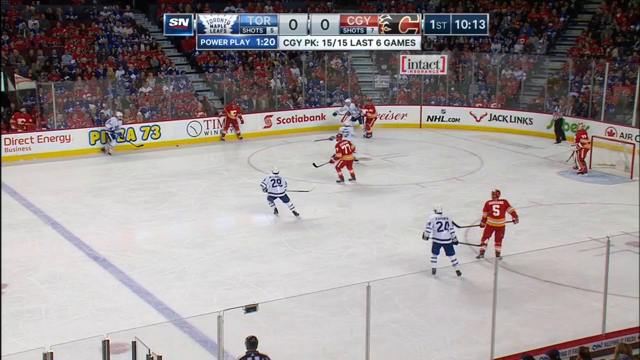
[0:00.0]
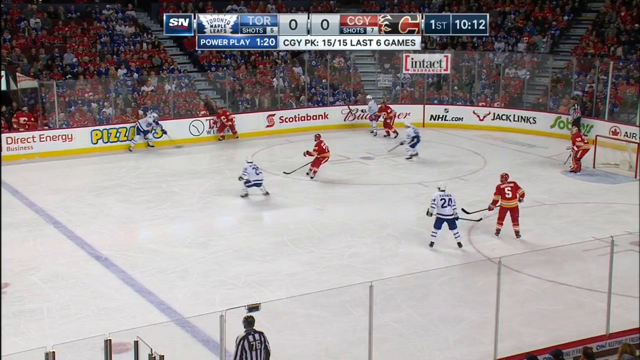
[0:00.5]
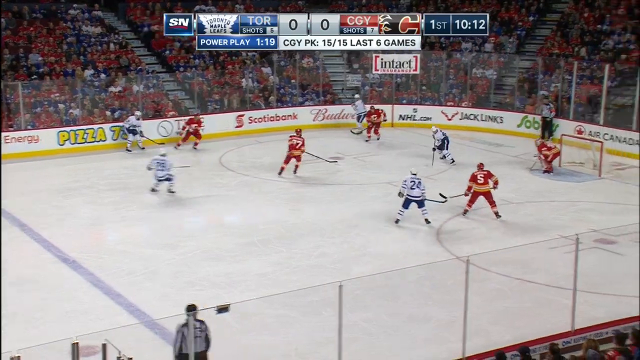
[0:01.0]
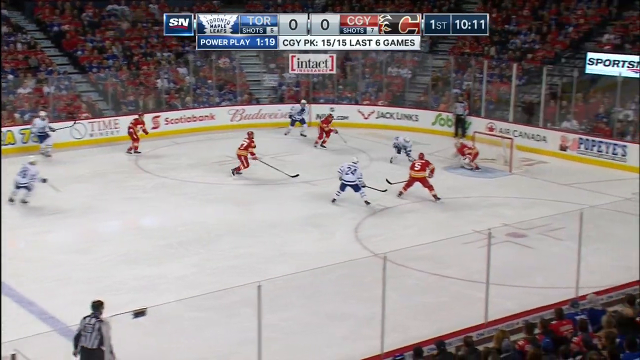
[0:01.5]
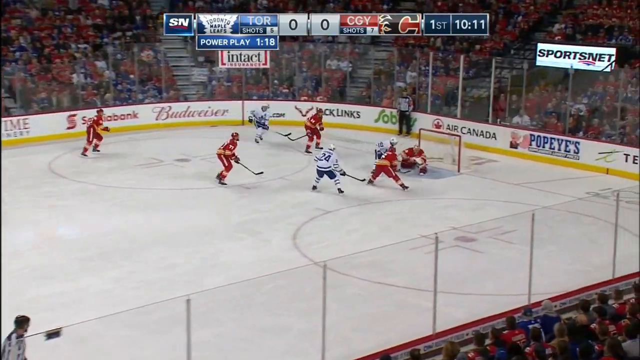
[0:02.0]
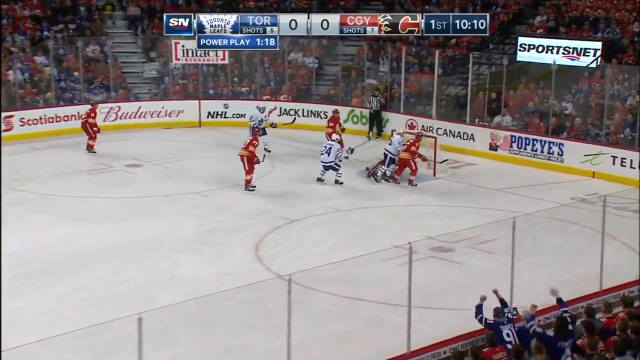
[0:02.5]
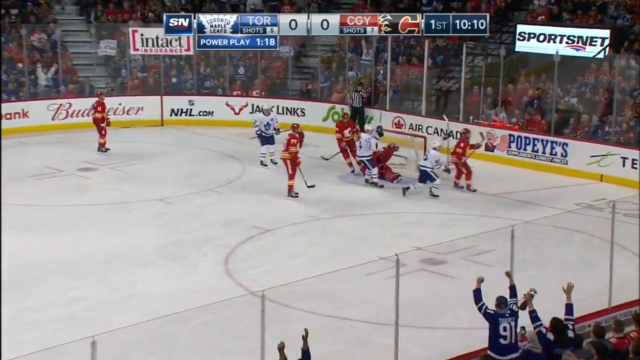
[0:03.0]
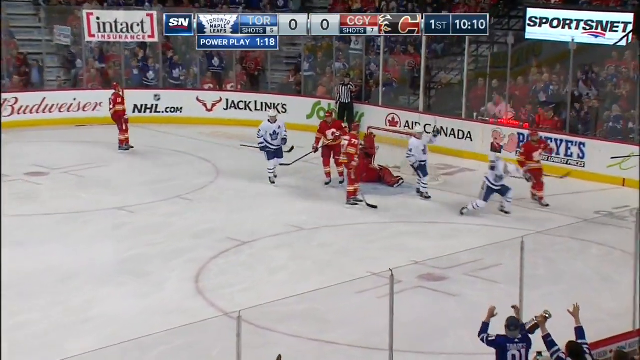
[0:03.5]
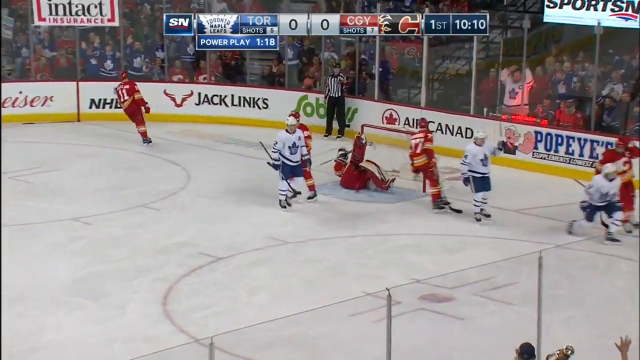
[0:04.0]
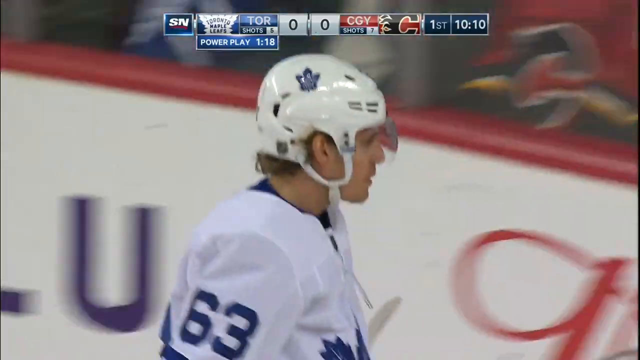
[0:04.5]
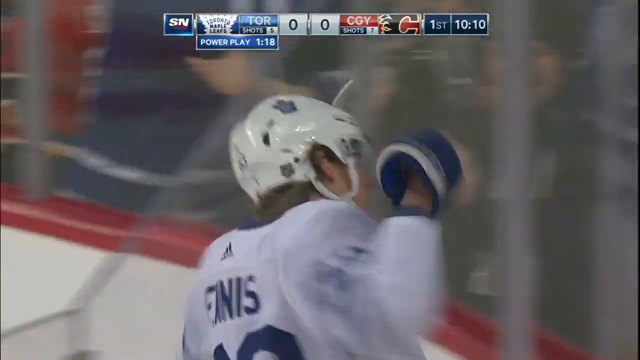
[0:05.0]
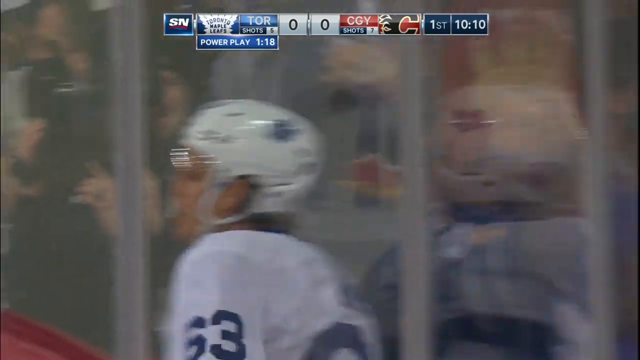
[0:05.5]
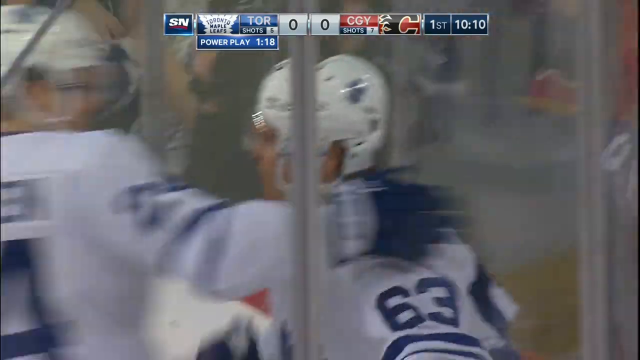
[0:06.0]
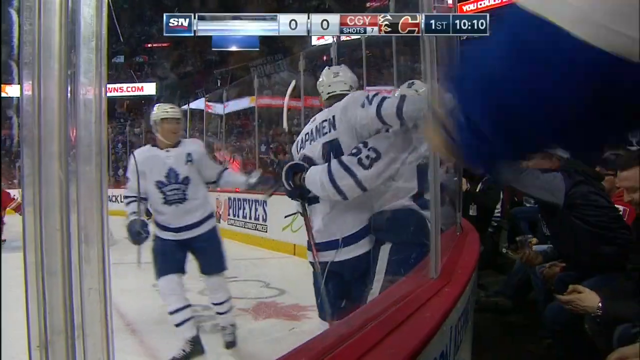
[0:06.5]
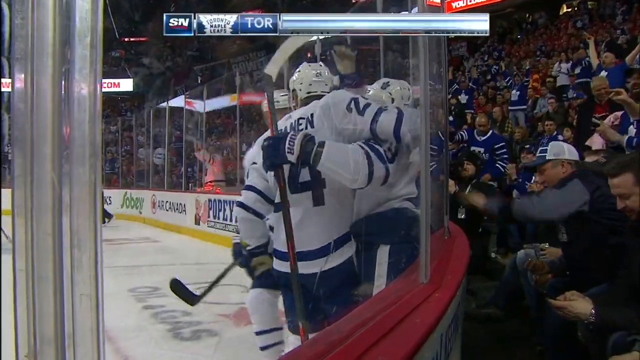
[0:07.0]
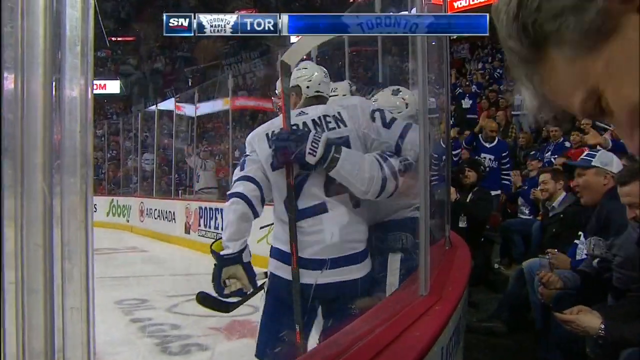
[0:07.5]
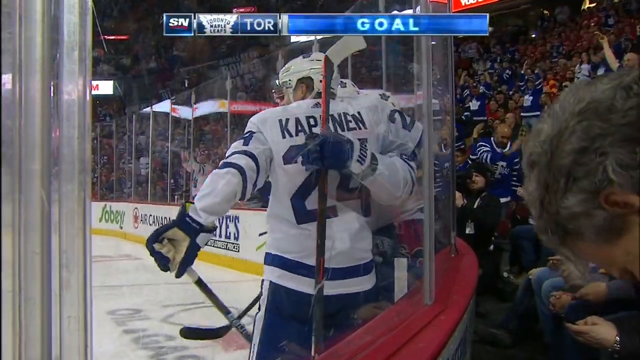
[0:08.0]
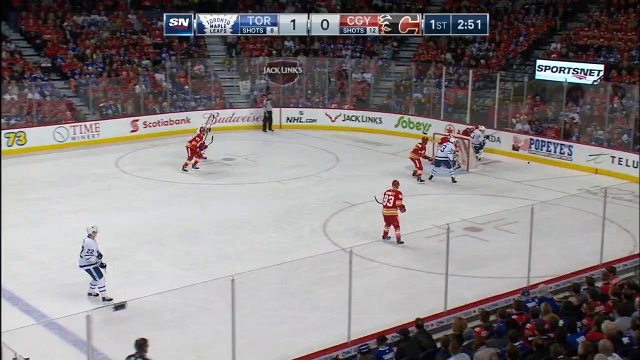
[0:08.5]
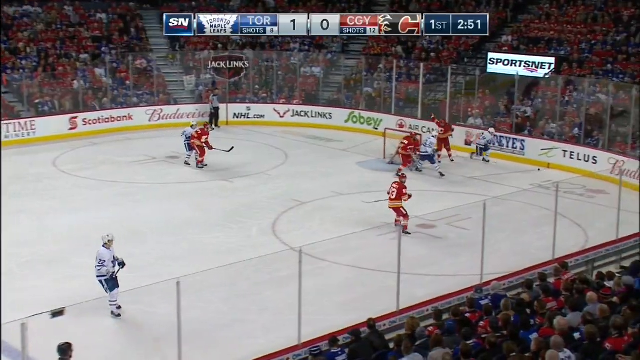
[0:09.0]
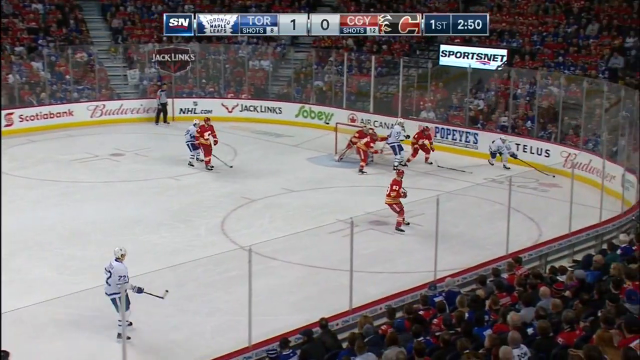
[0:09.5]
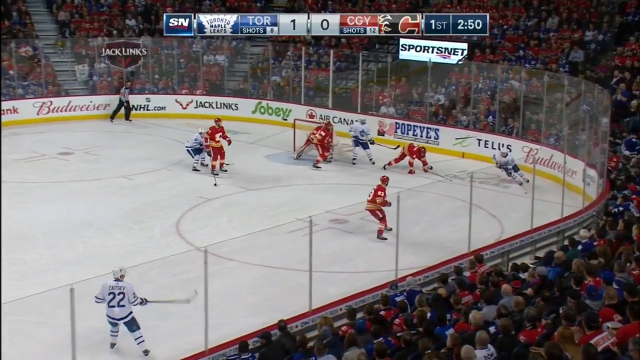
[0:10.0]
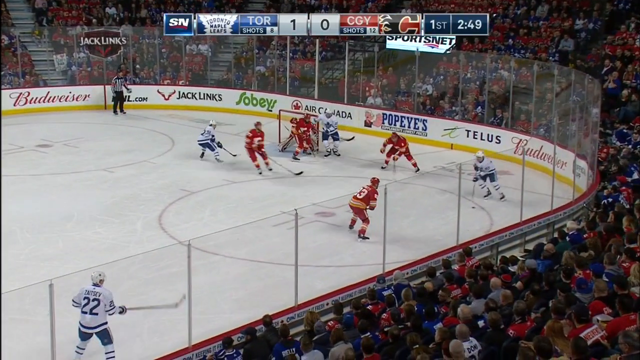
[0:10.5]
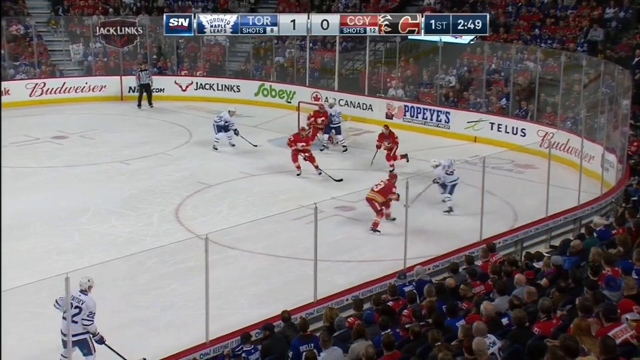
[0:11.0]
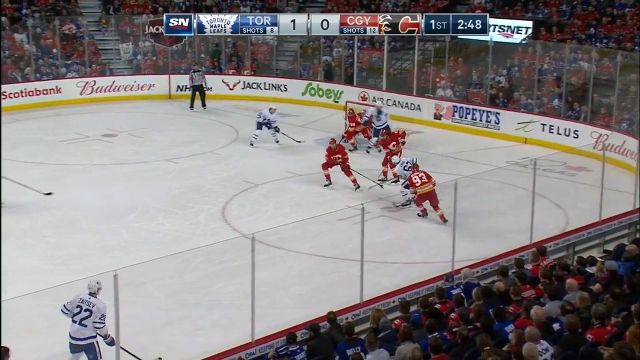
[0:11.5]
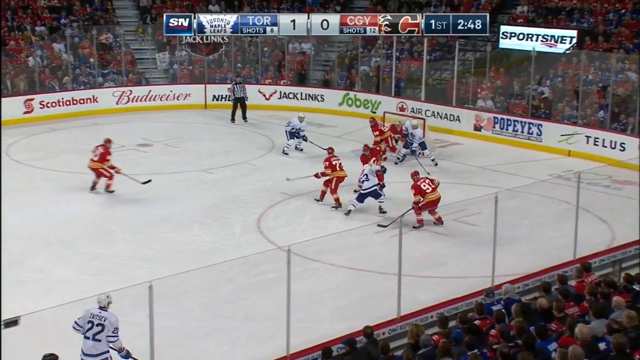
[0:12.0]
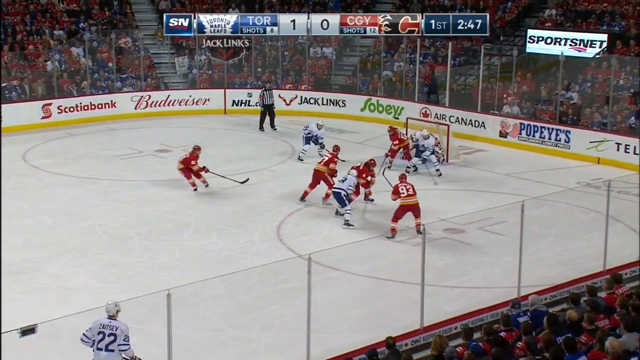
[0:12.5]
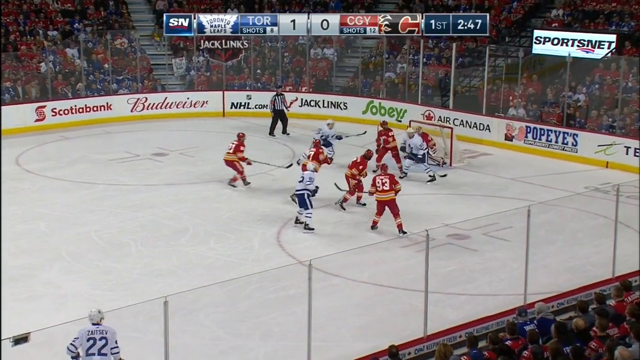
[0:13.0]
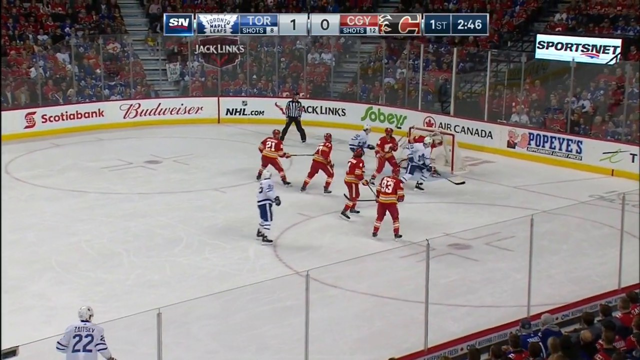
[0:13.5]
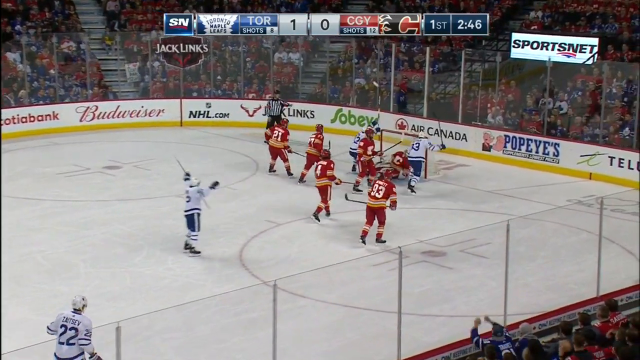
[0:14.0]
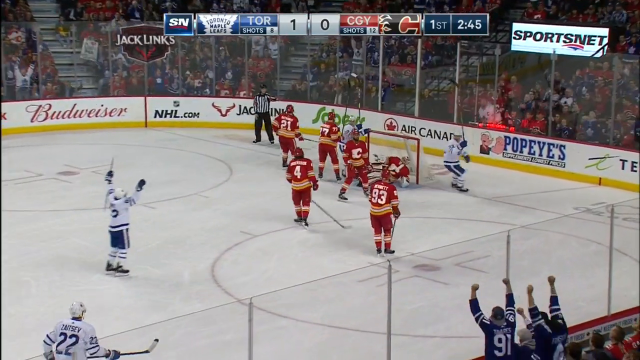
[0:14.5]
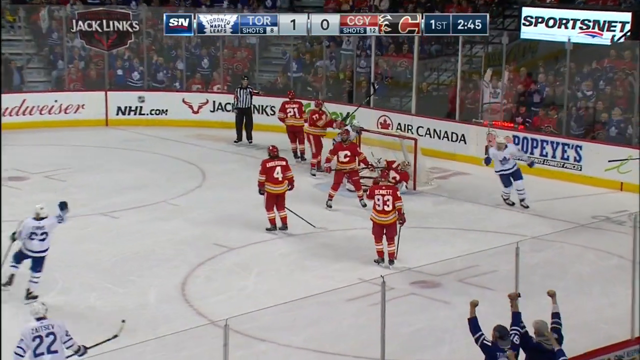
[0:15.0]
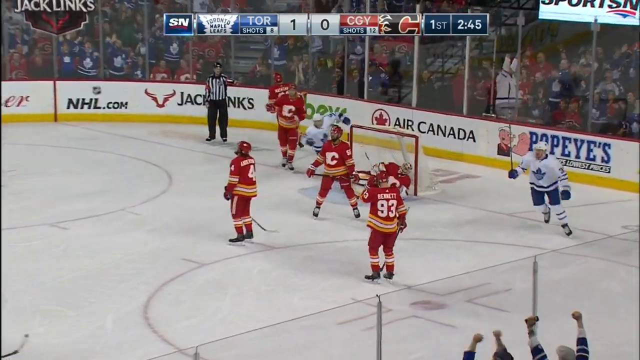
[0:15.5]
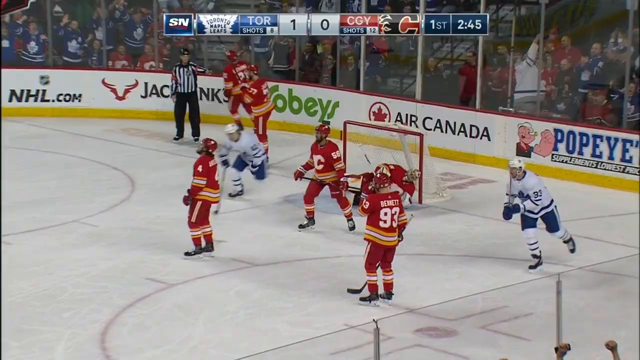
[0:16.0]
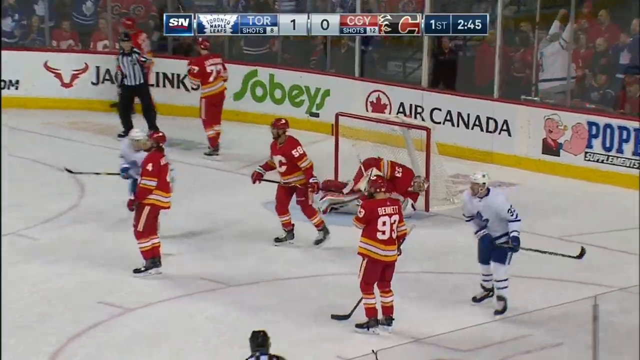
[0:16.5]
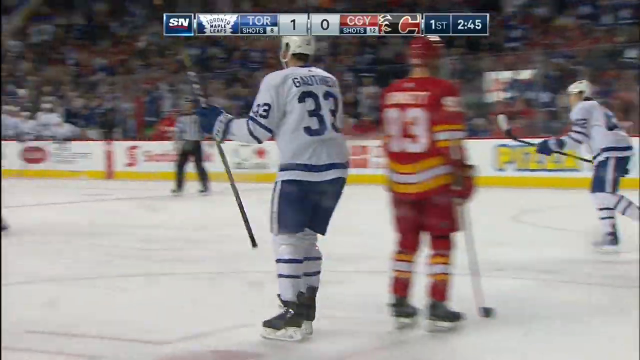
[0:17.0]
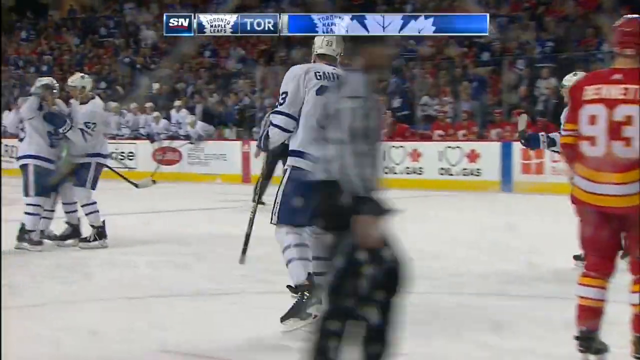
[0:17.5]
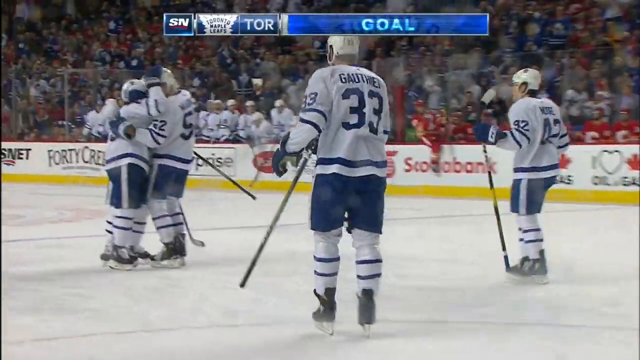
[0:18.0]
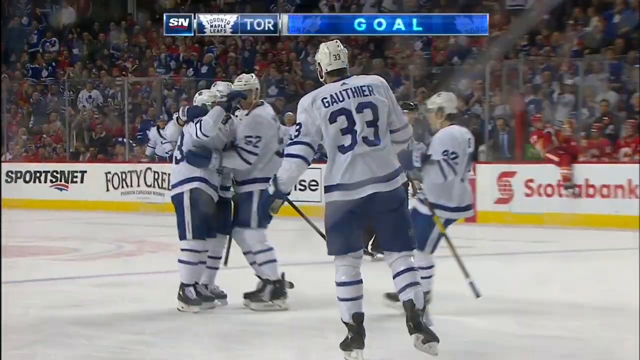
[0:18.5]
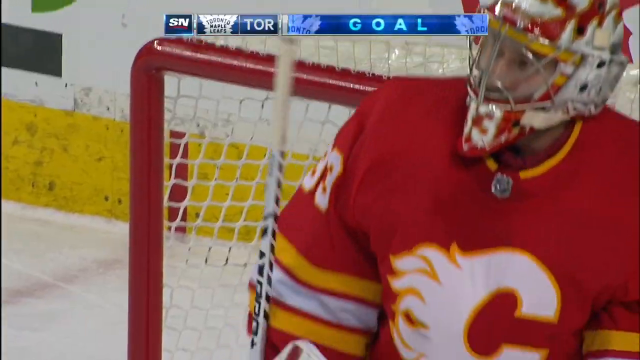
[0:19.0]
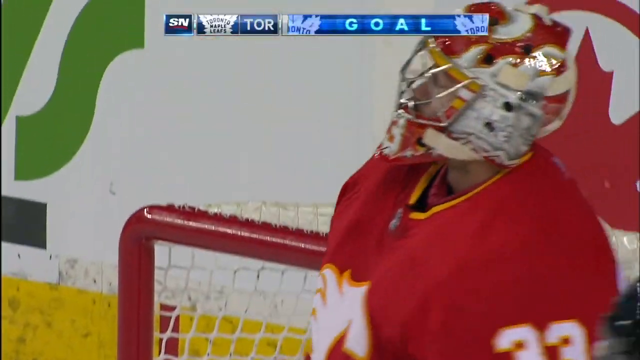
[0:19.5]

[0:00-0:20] A National Hockey League game between the Toronto Maple Leafs, wearing blue and out of Toronto, Ontario, and the Calgary Flames, wearing red and out of Alberta, Canada. Both teams are out on the hockey rink, five Toronto Maple Leafs players and five Calgary Flames players. Over in the right corner, the referee, wearing black and white, leans against the wall as he watches the players. Right away the Calgary Flames goalie tries to block the puck and falls down in the attempt, and a Toronto Maple Leafs player, Maccelli, number 63, hits the puck into the goal. He keeps skating over to the side of the rink, where his teammate Kapanen, number 24, comes over and wraps his right arm around his shoulder to congratulate him.